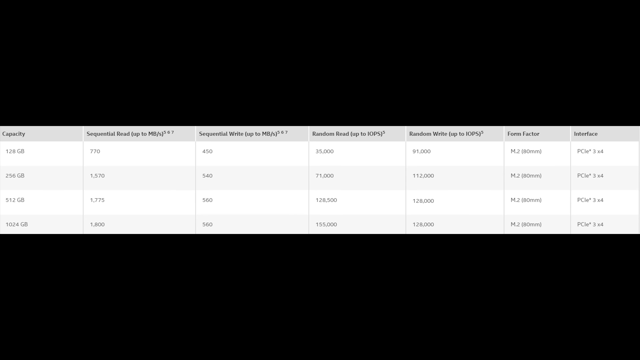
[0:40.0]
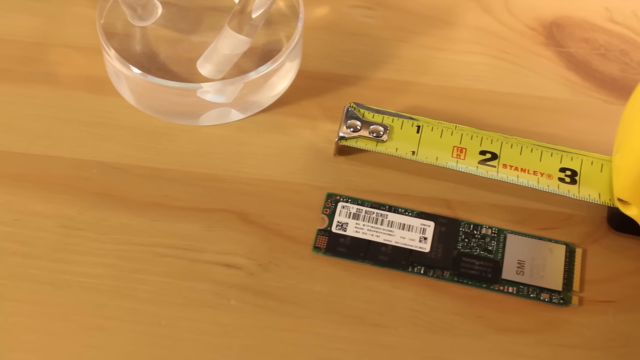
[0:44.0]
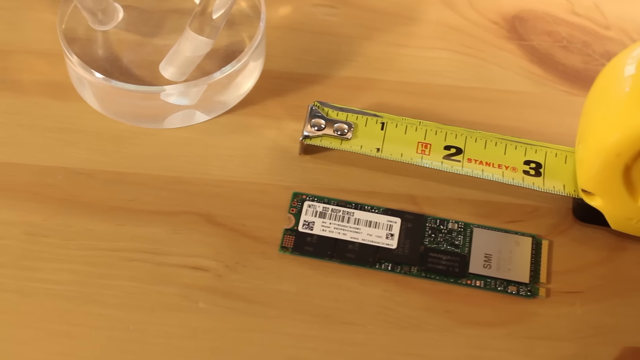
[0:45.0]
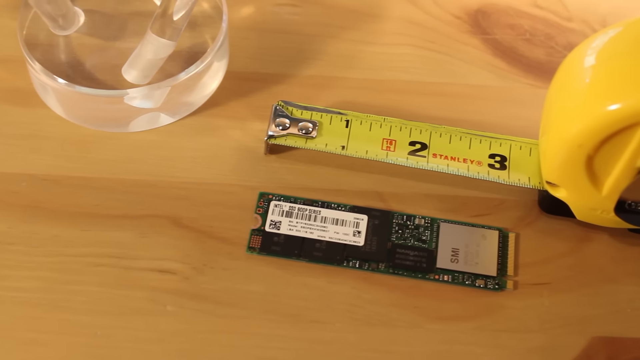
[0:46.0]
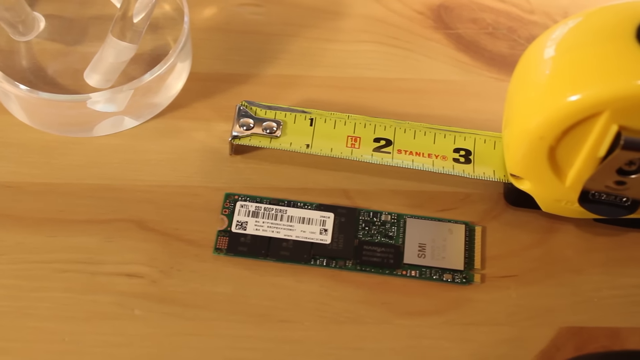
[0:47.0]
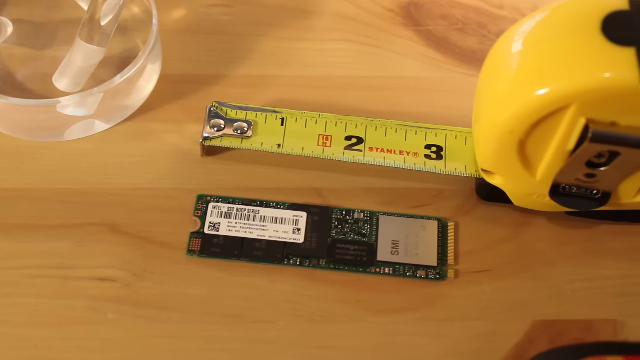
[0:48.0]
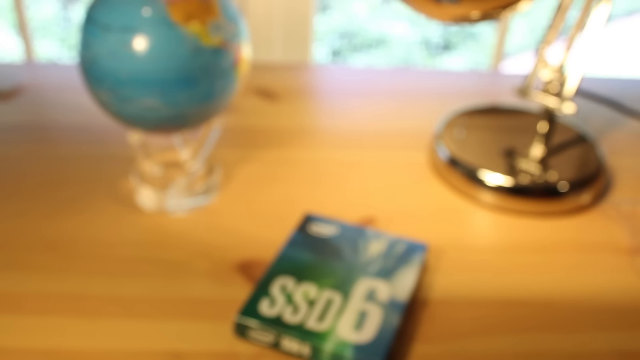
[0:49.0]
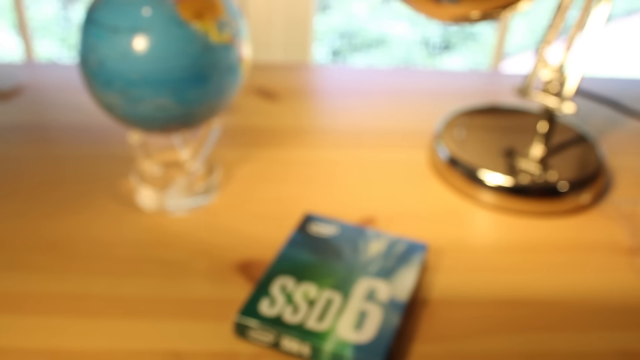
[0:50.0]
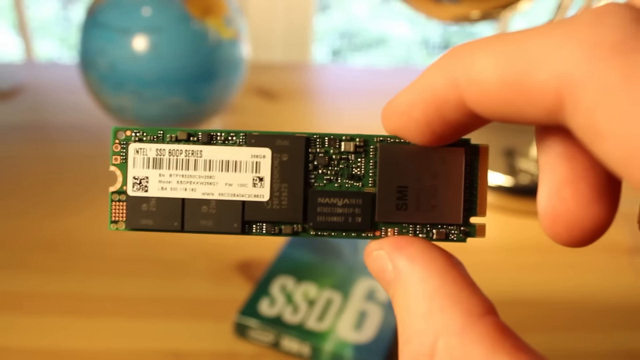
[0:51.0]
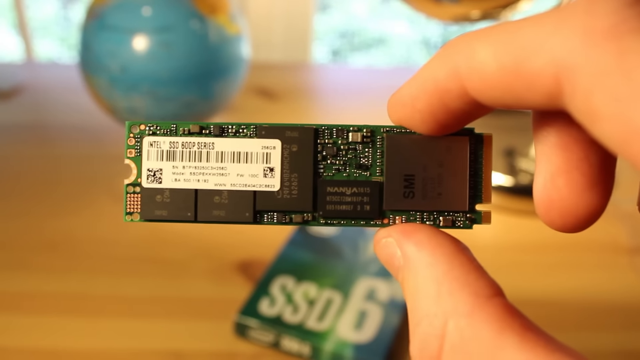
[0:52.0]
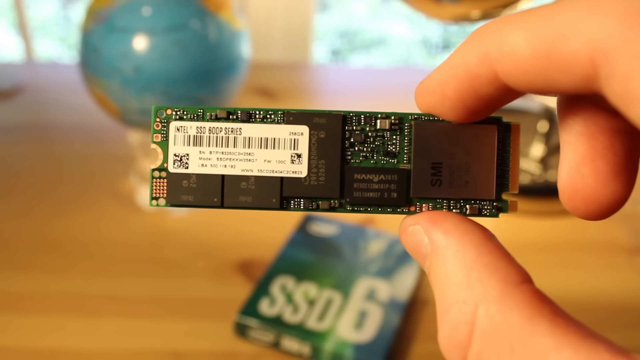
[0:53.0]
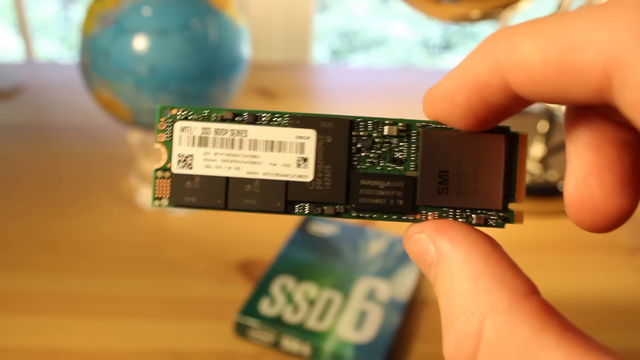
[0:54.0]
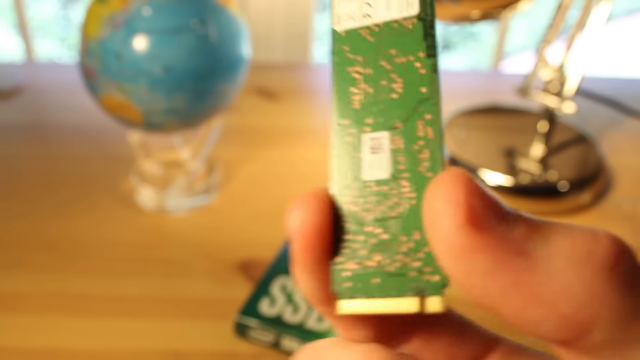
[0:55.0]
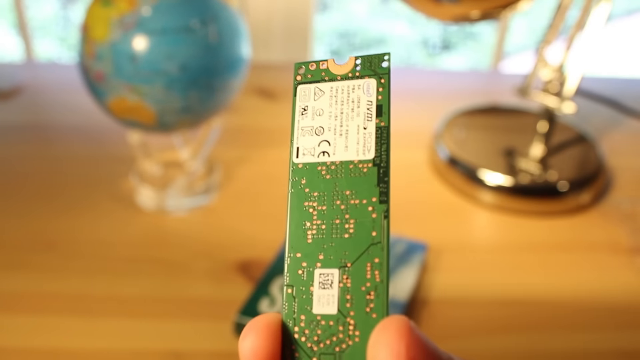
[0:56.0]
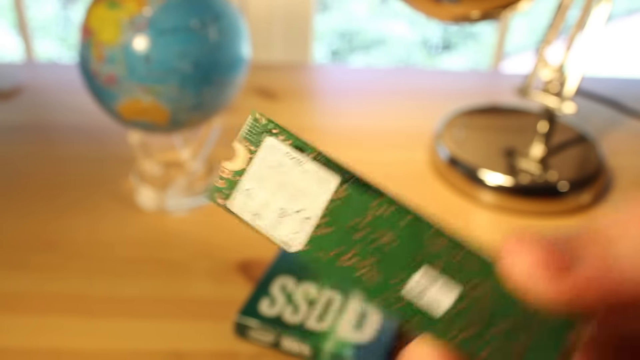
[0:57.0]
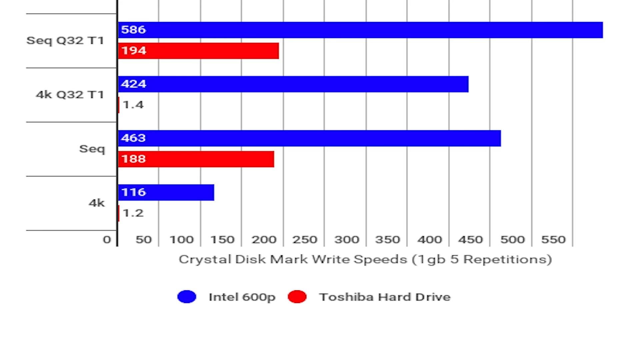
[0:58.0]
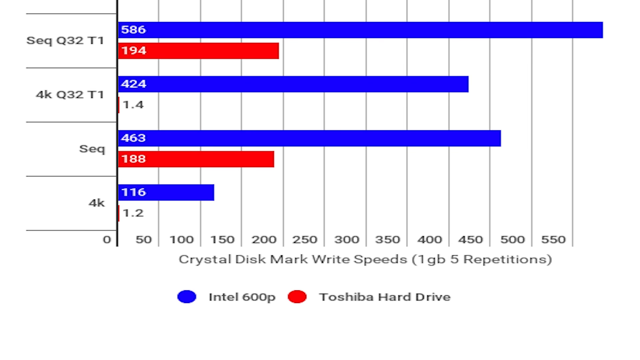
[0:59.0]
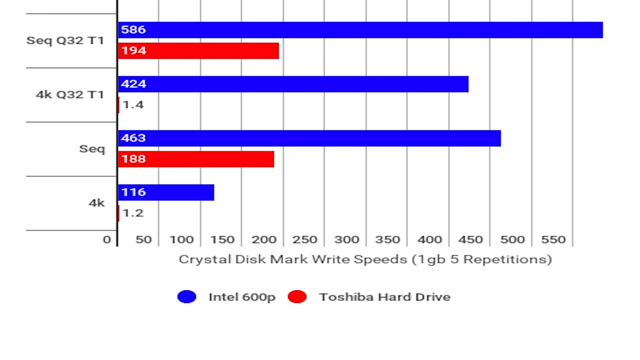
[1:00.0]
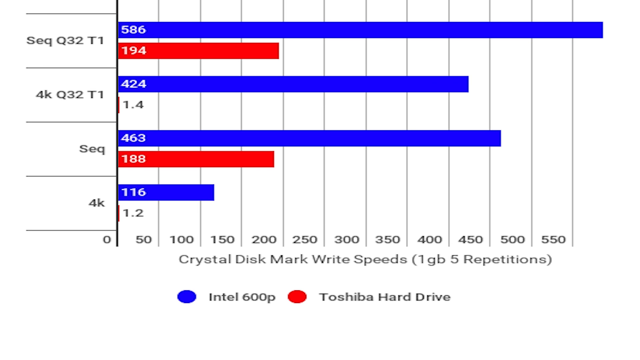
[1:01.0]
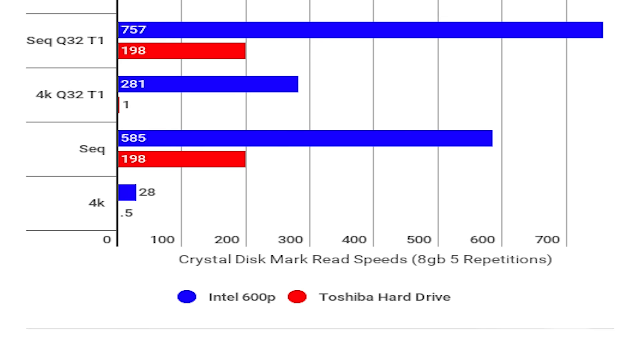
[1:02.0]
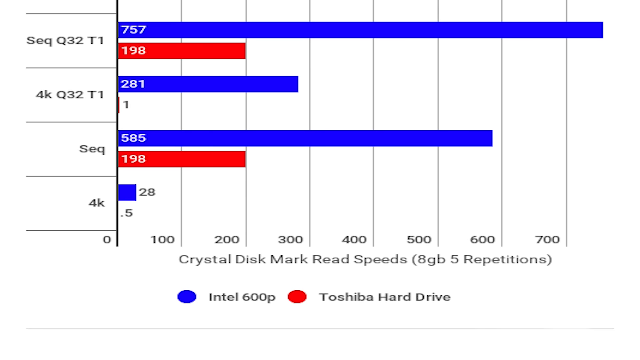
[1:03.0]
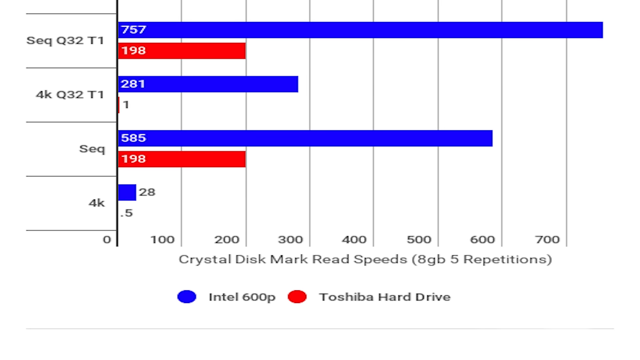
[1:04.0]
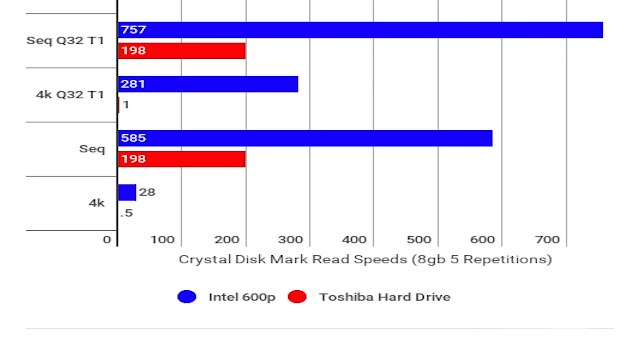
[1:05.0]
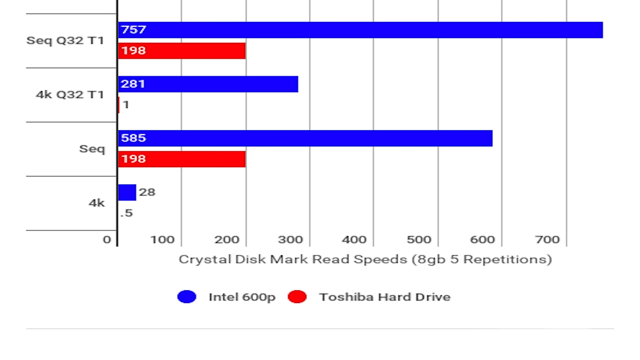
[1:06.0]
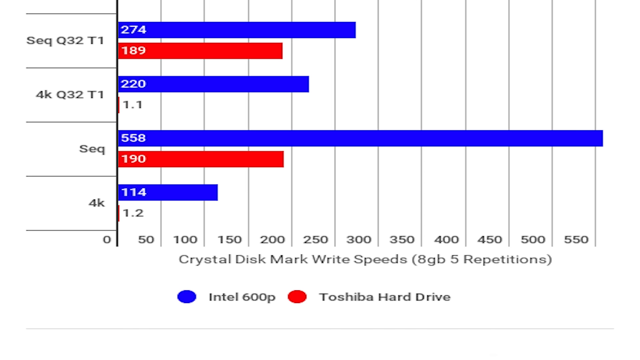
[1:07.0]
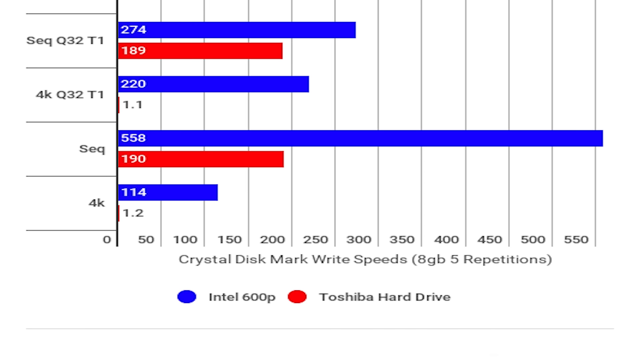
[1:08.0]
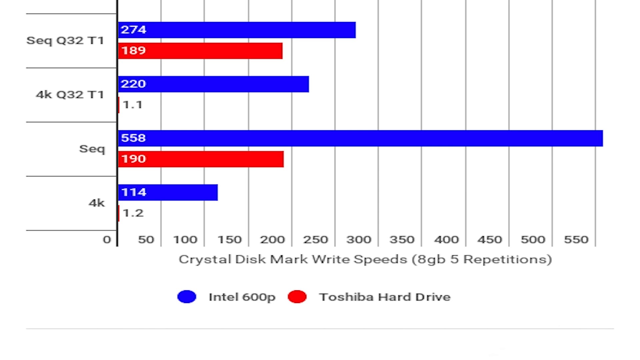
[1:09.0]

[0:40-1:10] A chart with seven columns and four rows is displayed. The rows are white with black text, and the headers are gray, also with black text. It stays on screen for several seconds, with black rectangles above and below it. The camera then slowly pans past some kind of glass cup on the left, which looks like it might contain water; its left side is cut off. It is on a wooden table that appears unfinished, with plain wood grain and no apparent stain. A bright yellow tape measure with a silver clip on its side is pulled out to three and a half inches, standing still as it measures a green computer chip with little silver components, a black rectangle attached to it and a label. A blurry shot follows of some kind of box, what looks like a lamp, and a globe on a wooden table. A hand appears from the right side of the screen and holds the computer chip in front of the camera, showing the barcode and black text on a white label. The chip is turned around, revealing the other side, which is green with lots of little silver components. Then a bar graph with blue and red bars appears, followed by another, different graph.